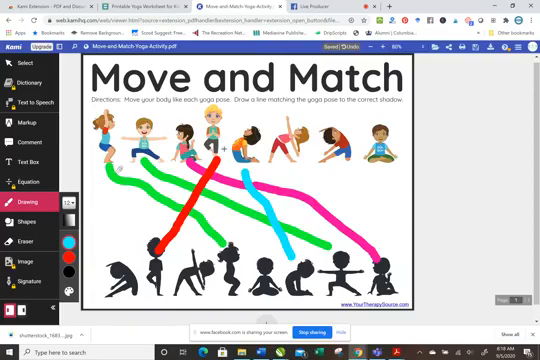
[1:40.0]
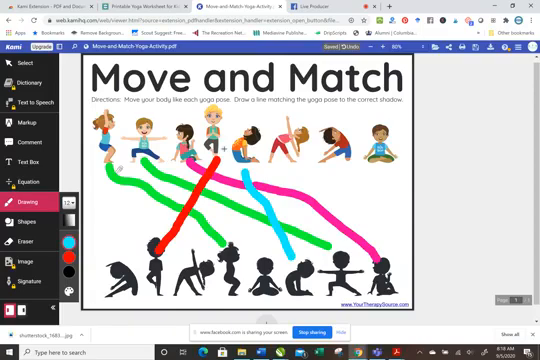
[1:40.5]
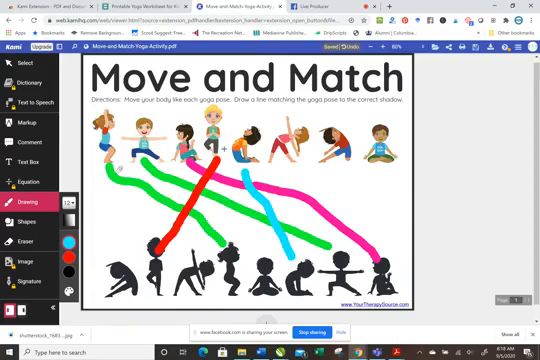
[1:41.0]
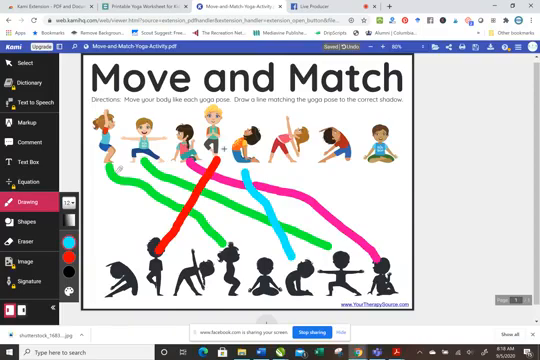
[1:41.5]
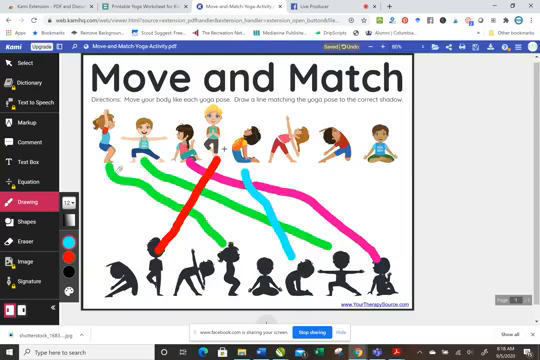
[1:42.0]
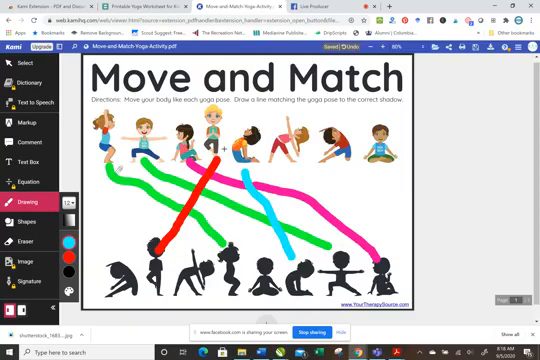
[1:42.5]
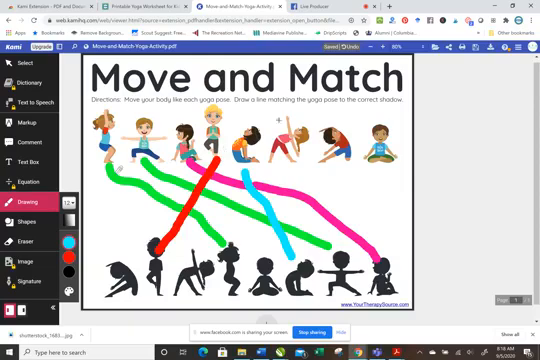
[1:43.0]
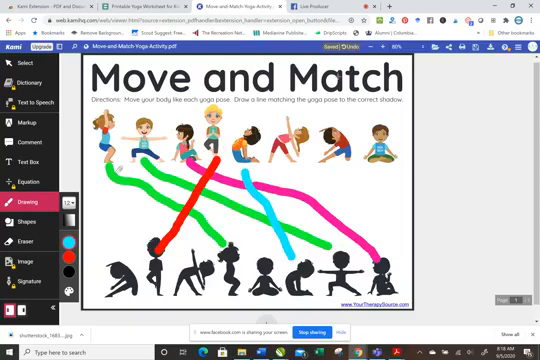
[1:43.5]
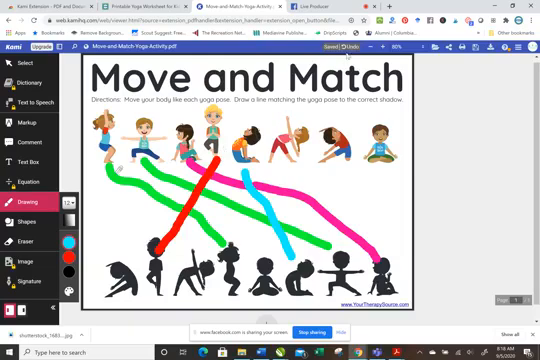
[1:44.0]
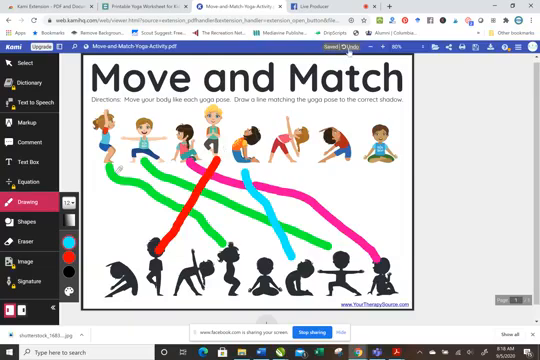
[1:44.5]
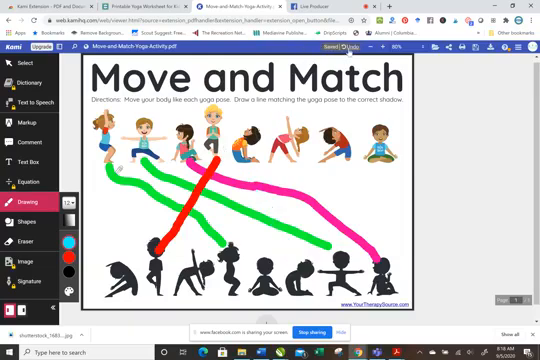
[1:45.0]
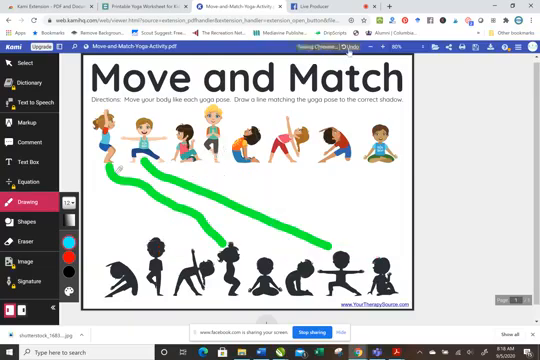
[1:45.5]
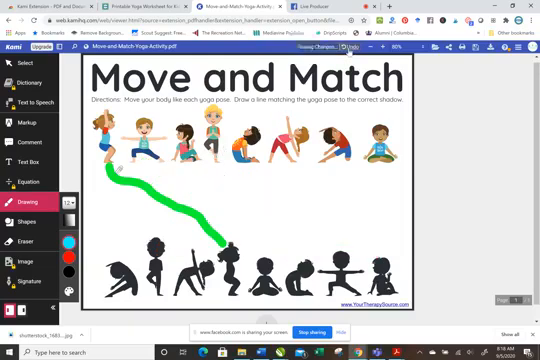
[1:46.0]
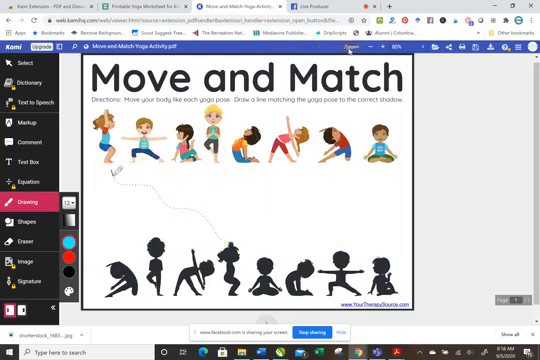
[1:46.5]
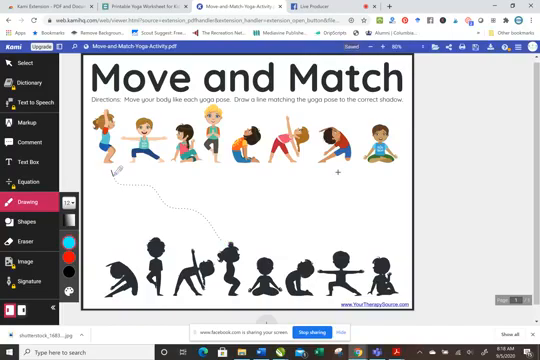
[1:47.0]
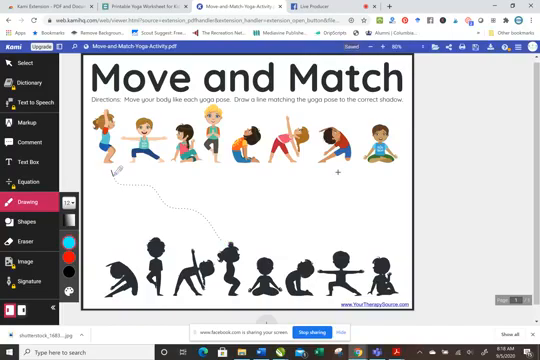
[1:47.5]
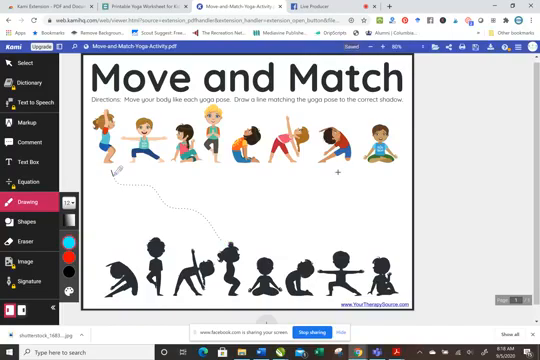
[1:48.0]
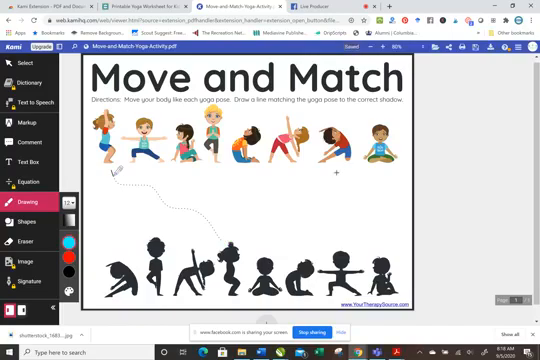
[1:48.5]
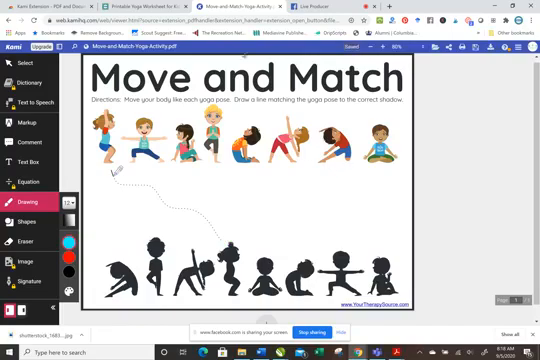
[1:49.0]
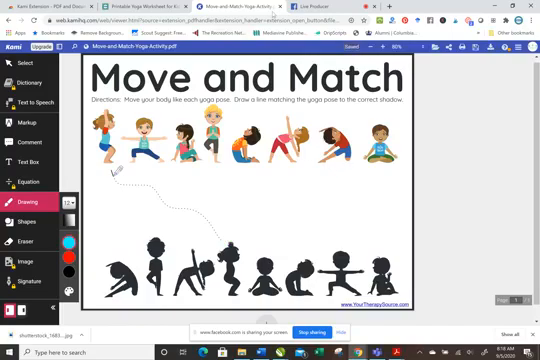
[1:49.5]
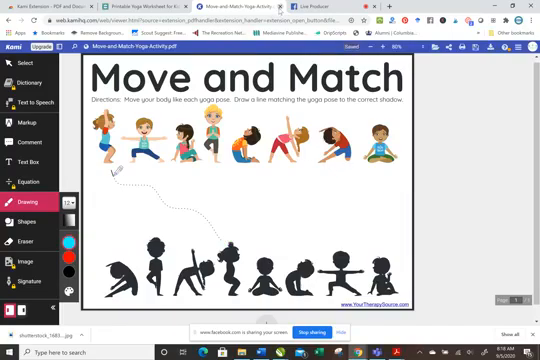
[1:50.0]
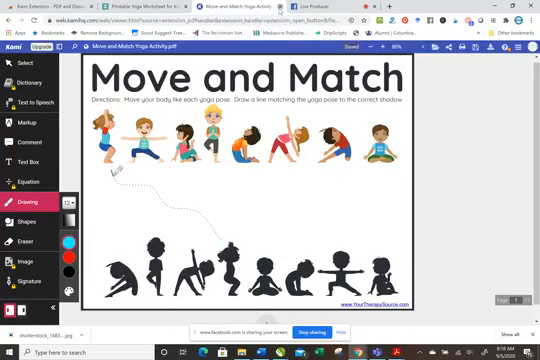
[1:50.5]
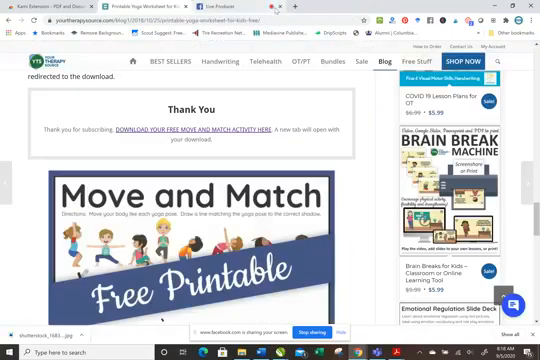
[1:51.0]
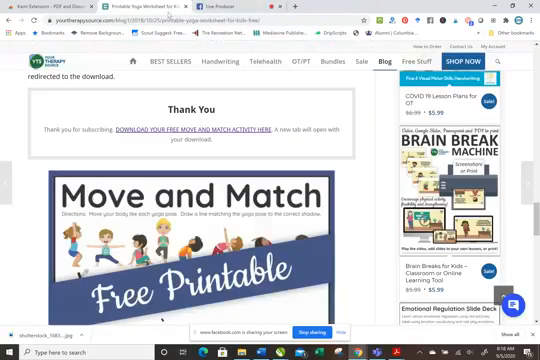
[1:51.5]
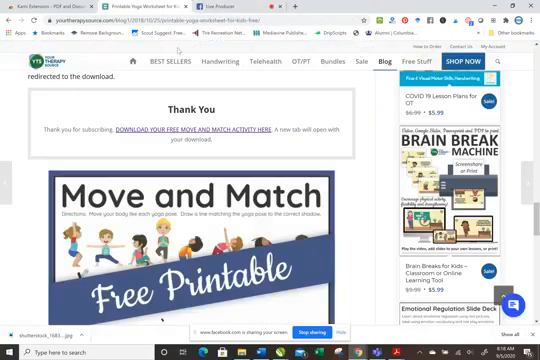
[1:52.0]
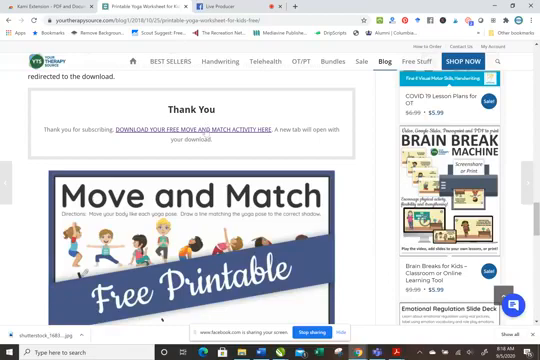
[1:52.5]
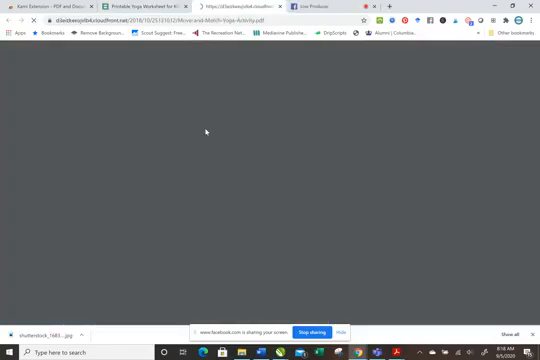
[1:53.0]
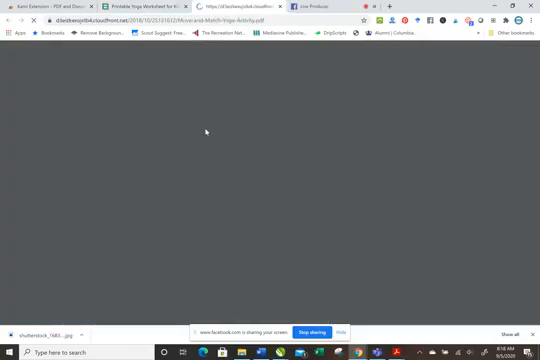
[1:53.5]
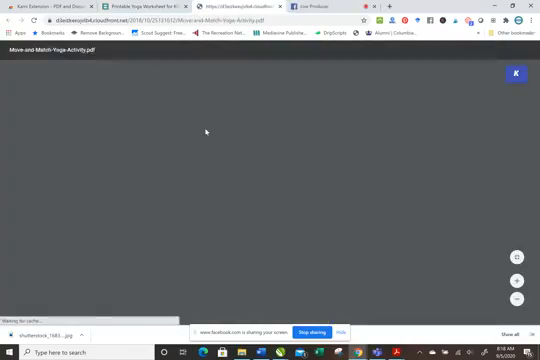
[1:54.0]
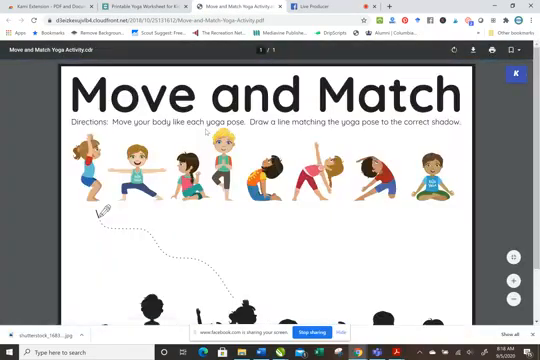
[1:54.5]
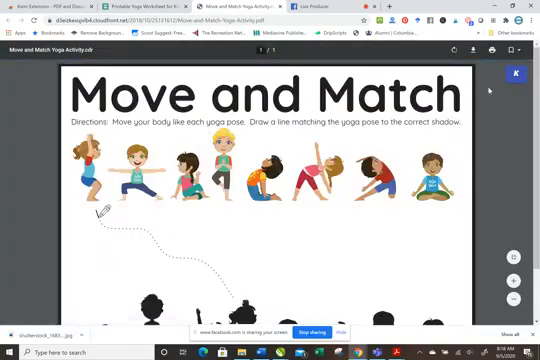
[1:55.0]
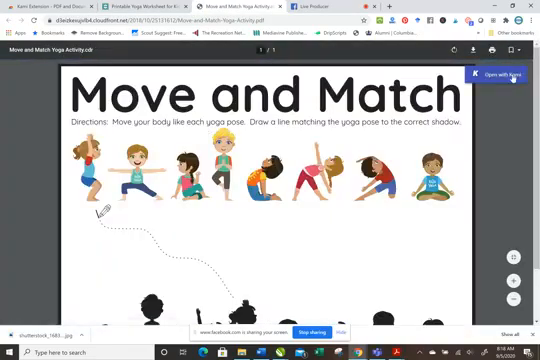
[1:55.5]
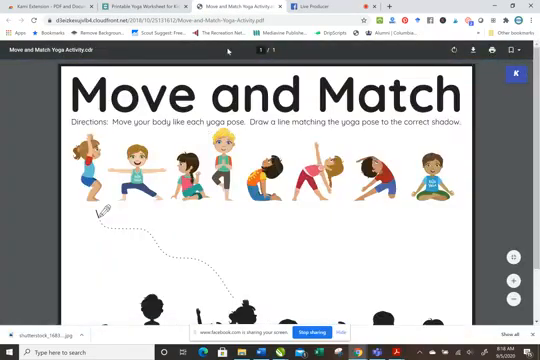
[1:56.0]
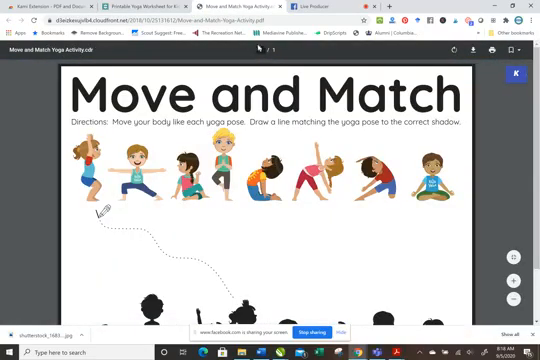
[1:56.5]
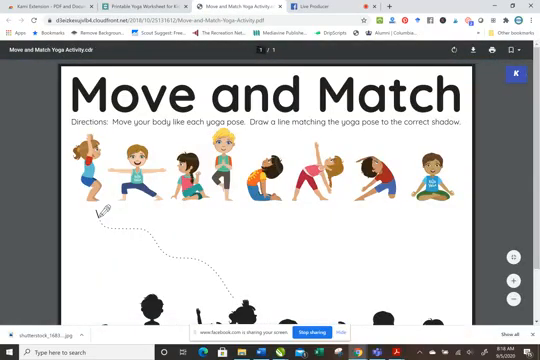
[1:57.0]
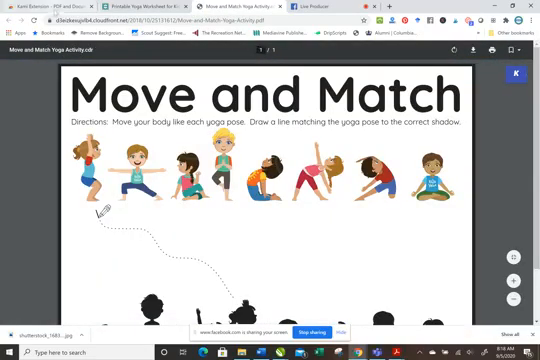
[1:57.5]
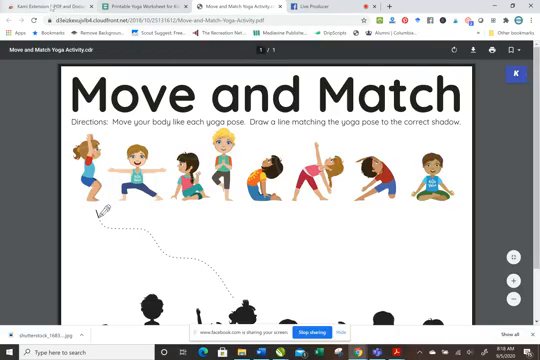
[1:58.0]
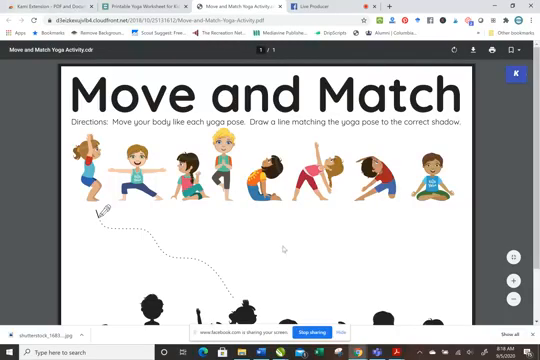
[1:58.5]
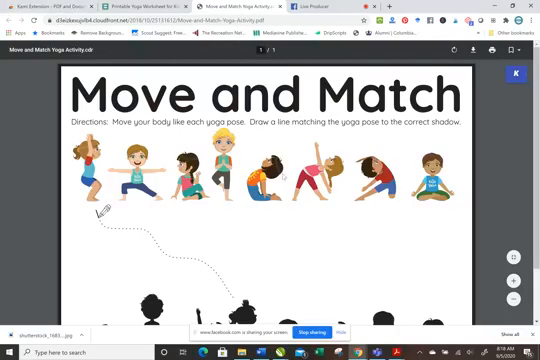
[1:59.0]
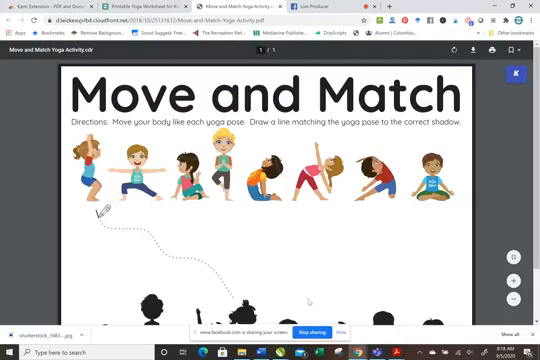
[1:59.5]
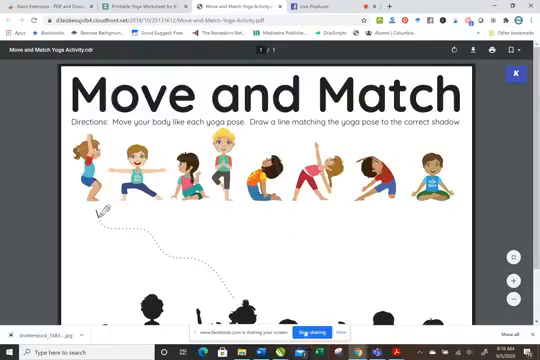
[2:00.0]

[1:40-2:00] The user presses the undo button five times, removing all of the colorful lines matching the yoga poses before finishing the remaining 4 poses. The user then goes to the tab bar at the top of the laptop screen, returns to the Therapy Source tab where the Move and Match free printable came from, and clicks on the Move and Match free printable again to start with a fresh slate. The Therapy Source website has an area to buy a learning tool for the classroom, along with tabs for best sellers, bundles, sale, telehealth and free stuff. The website seems geared toward teachers, given the products and services offered.